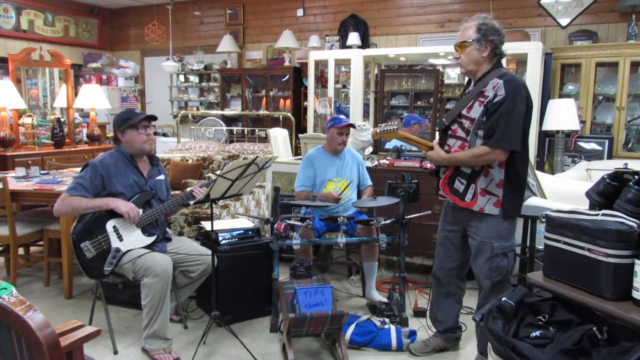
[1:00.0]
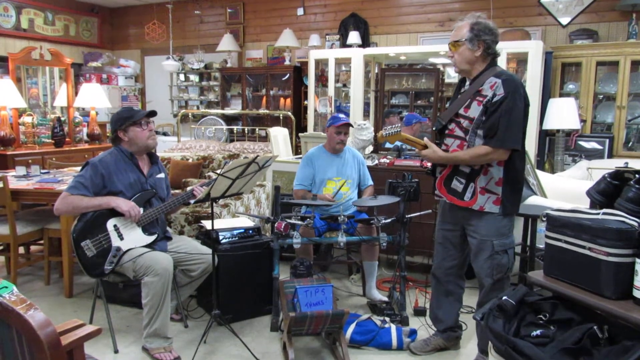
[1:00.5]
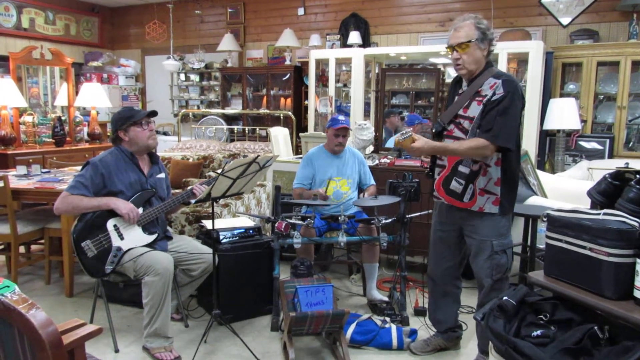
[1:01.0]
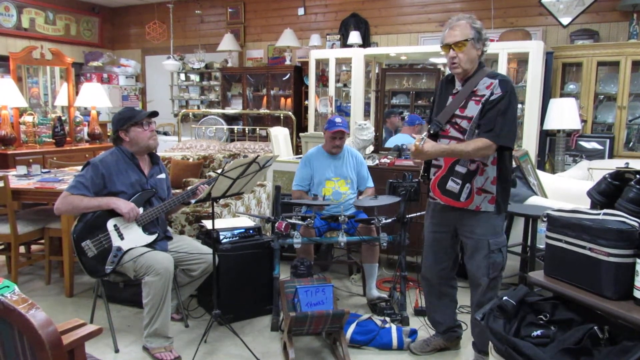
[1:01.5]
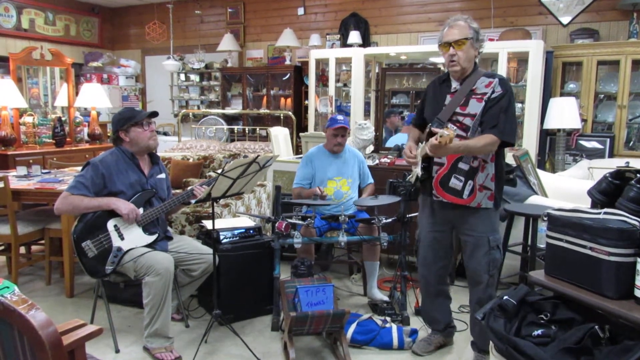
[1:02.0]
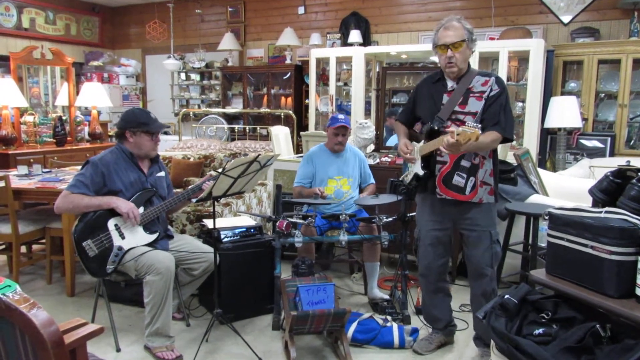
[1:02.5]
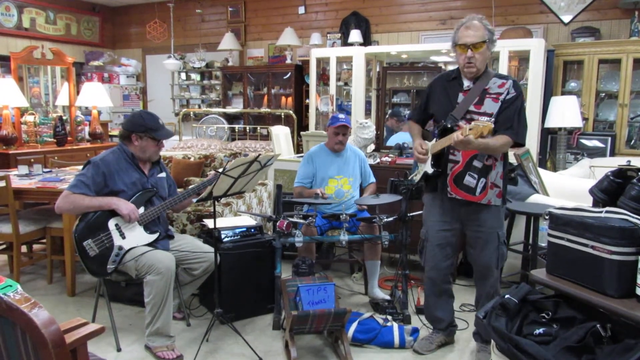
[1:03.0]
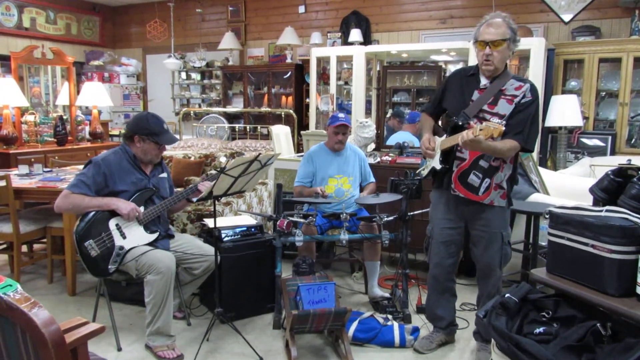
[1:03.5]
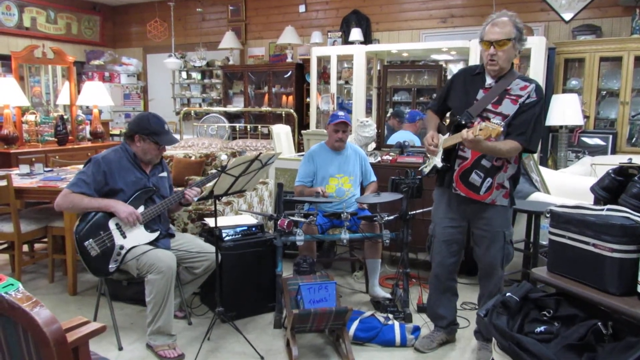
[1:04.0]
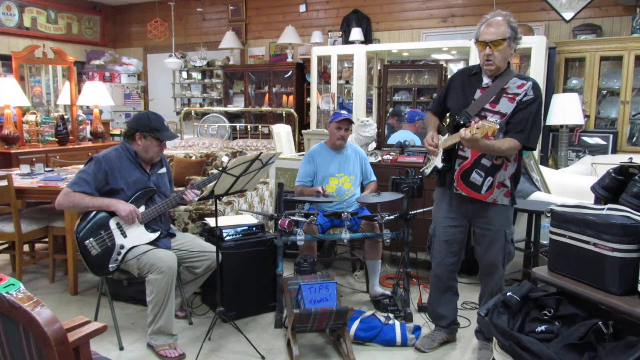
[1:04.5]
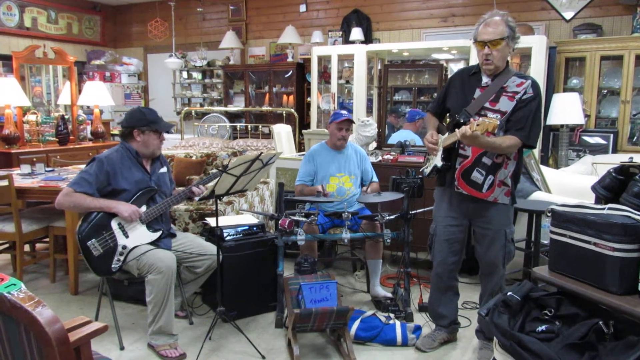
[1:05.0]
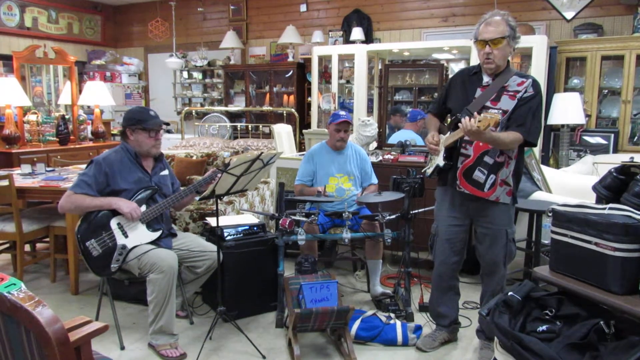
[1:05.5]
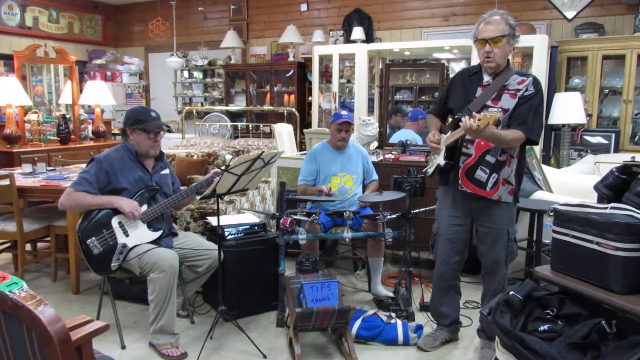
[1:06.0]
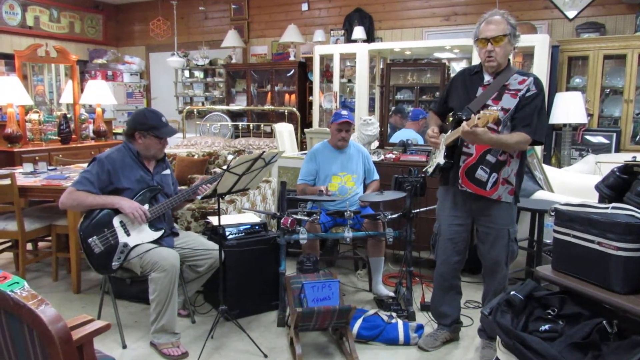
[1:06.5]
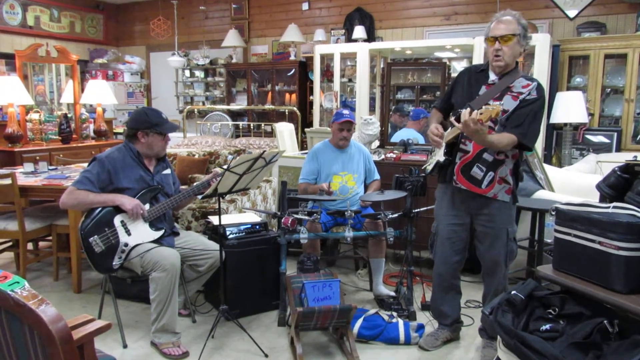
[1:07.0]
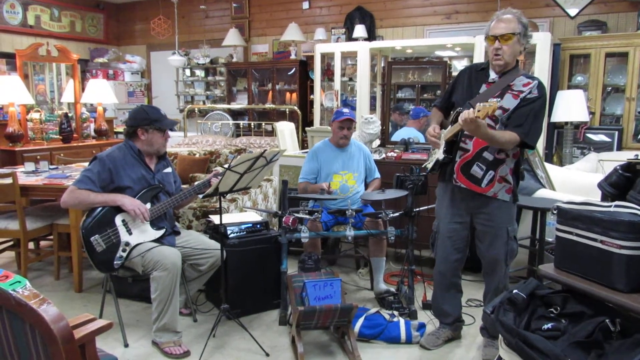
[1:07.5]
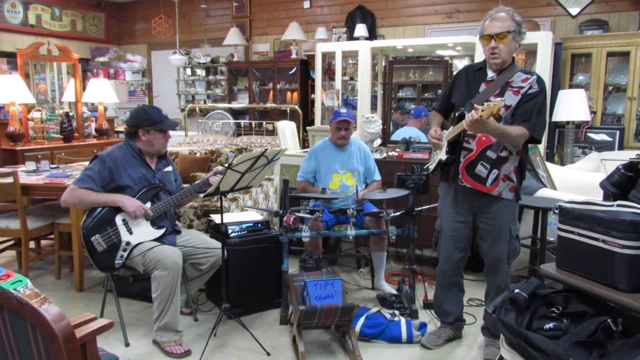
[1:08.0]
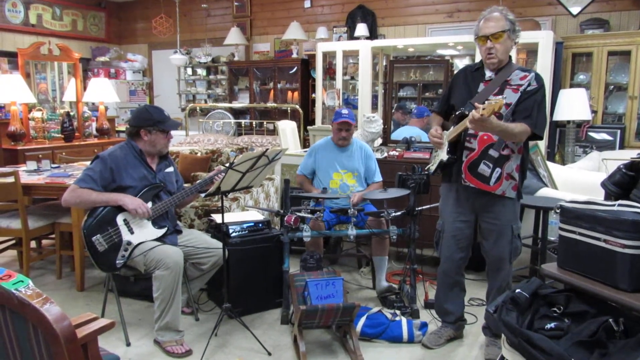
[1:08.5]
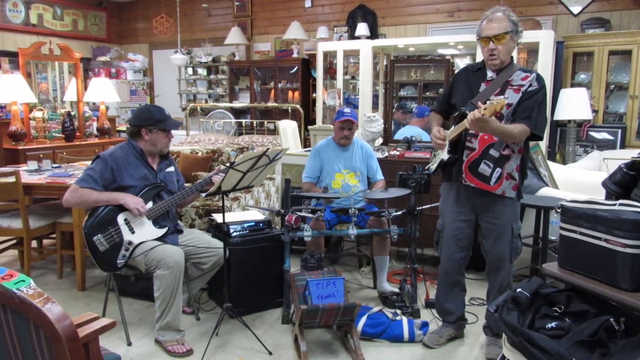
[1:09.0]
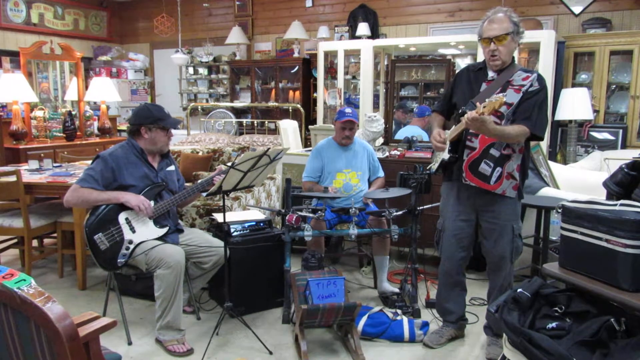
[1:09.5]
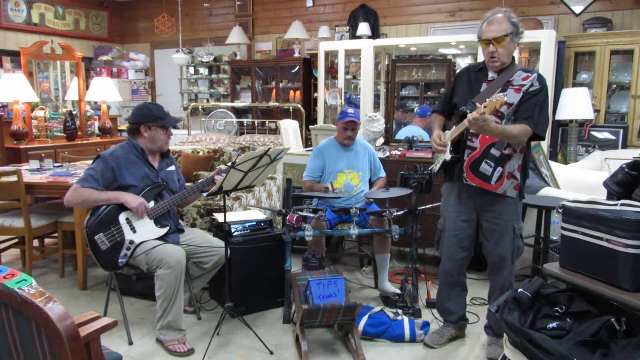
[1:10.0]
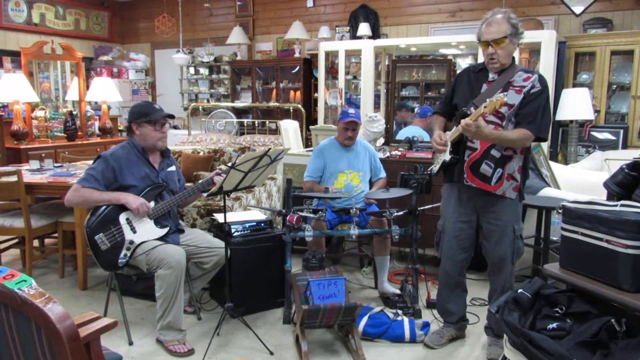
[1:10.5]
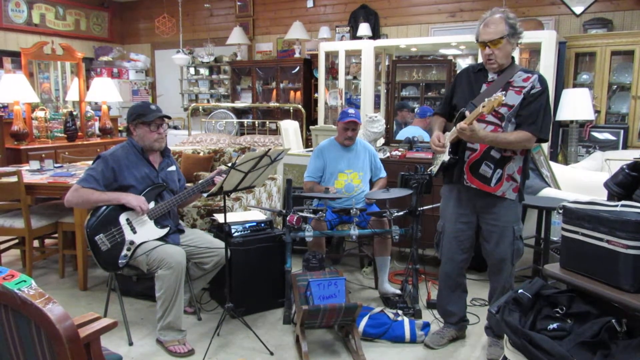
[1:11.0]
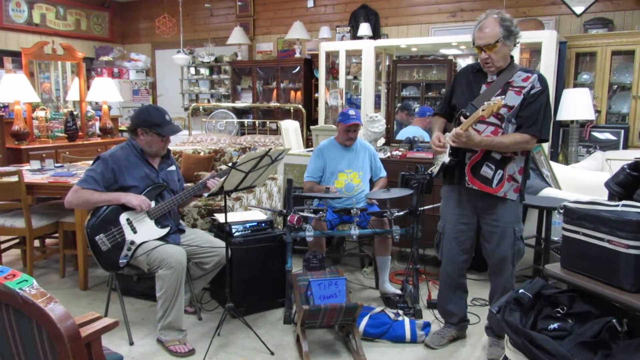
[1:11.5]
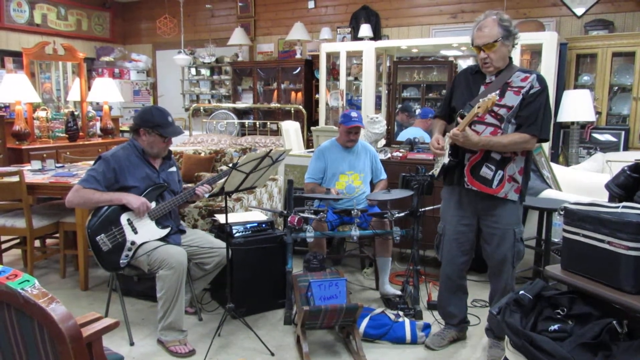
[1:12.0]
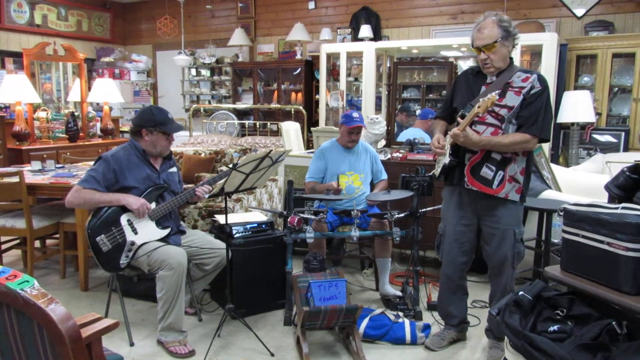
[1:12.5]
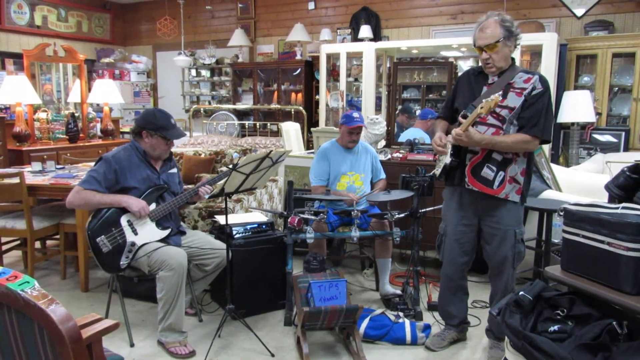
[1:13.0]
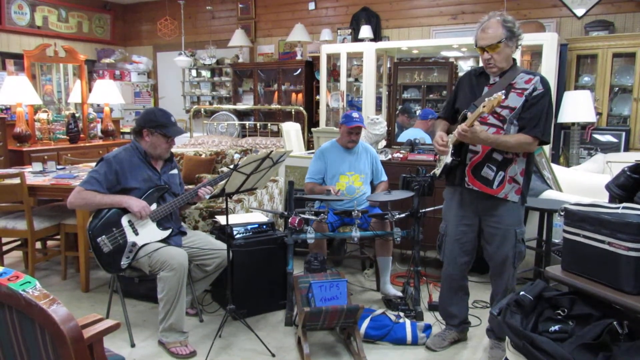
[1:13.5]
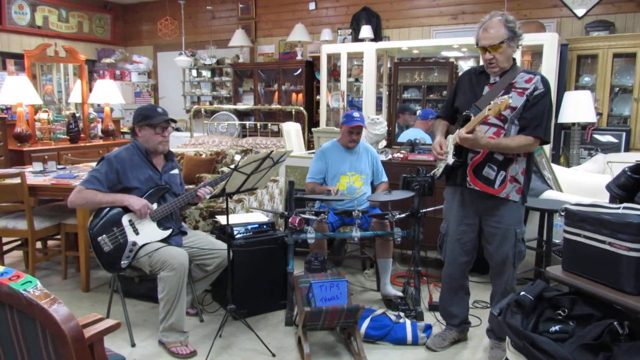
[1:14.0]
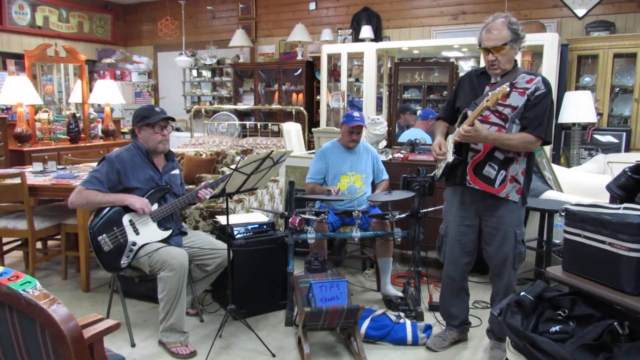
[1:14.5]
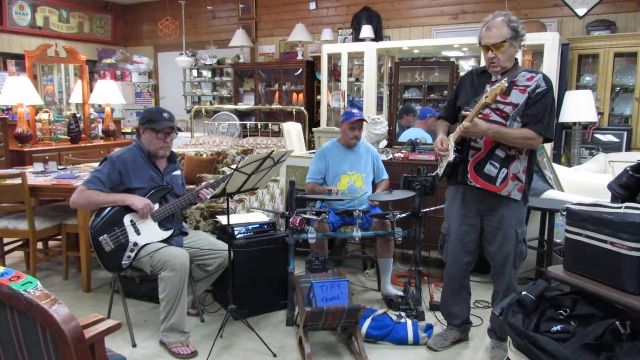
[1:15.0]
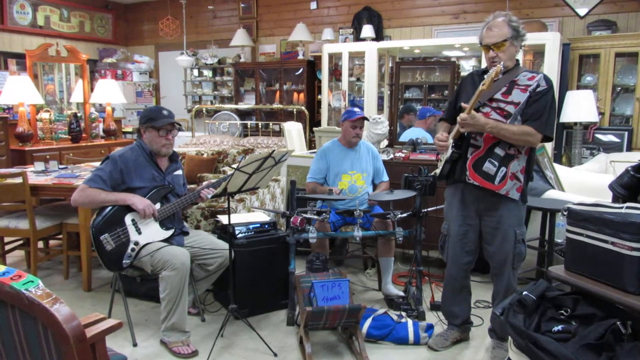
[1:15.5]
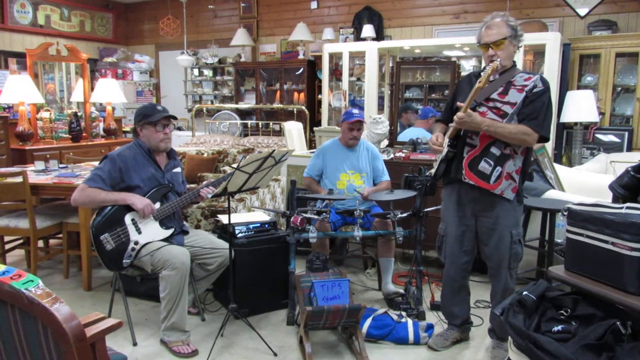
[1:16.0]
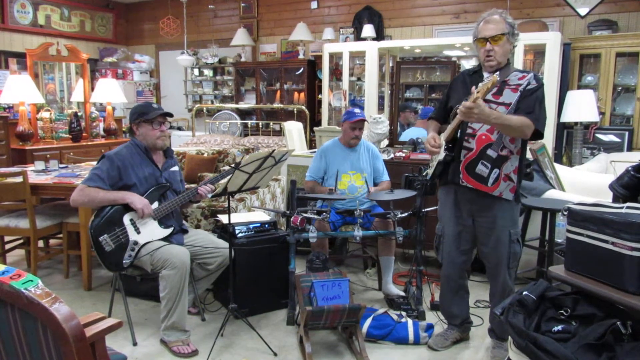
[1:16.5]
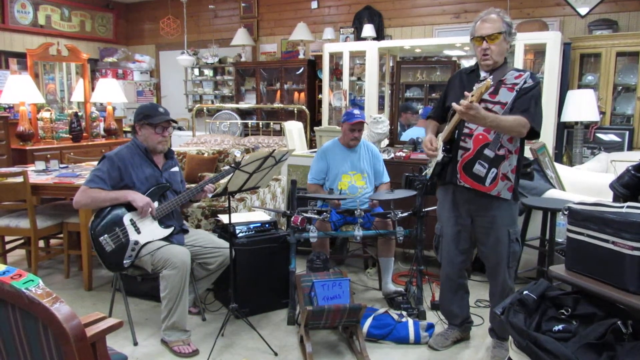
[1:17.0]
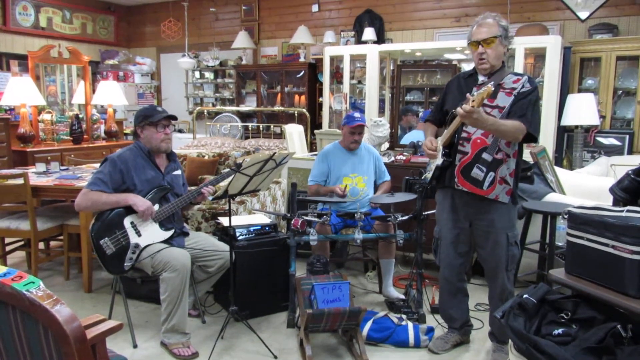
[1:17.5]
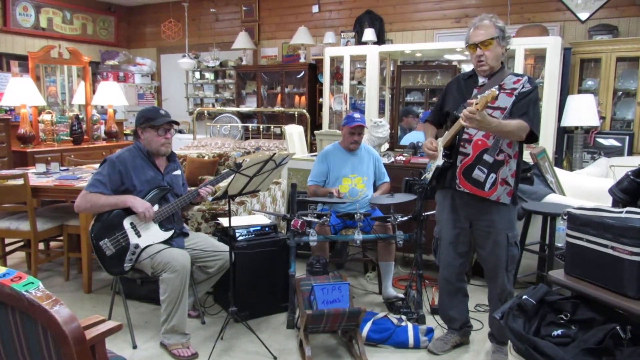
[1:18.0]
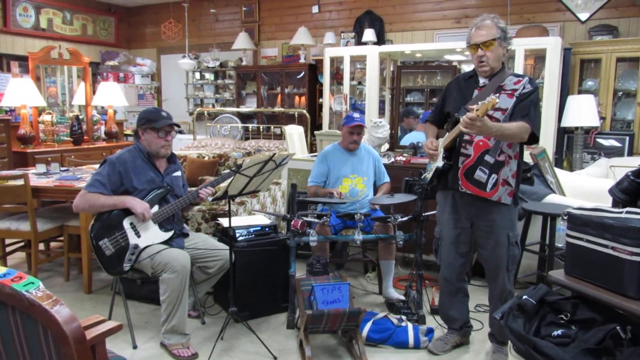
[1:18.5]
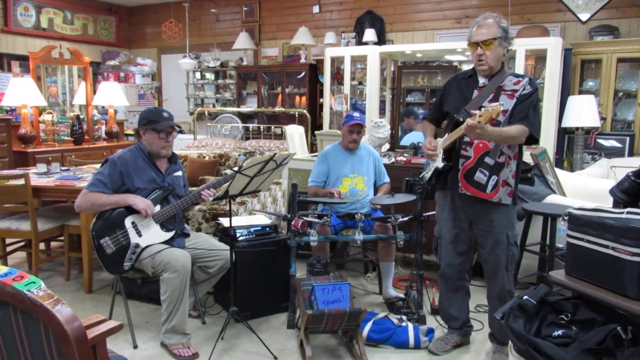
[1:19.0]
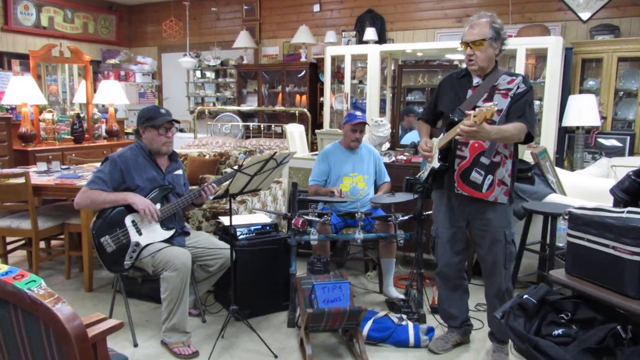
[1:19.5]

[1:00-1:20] The practice continues and speeds up a little. The guitarist is jamming more, moving with the groove, and the bass guitar goes along with it. The drummer plays casually, not doing too much or showing off. The background has a lot of brown and a lot of cabinets. The main guitarist wears the yellow glasses, and the drums are electronic with mechanical cymbals. Behind the bass player in the background there is a table, not really a coffee table but more like a dinner table. Something black is on top of the white cabinet. There is a fancy mirror dresser; there are two dressers, one to the left and one to the right or behind the drummer. There are lots of lamps, the tip jar, and the luggage with what looks like a pair of shoes on top of it. Another light brown cabinet is to the right.